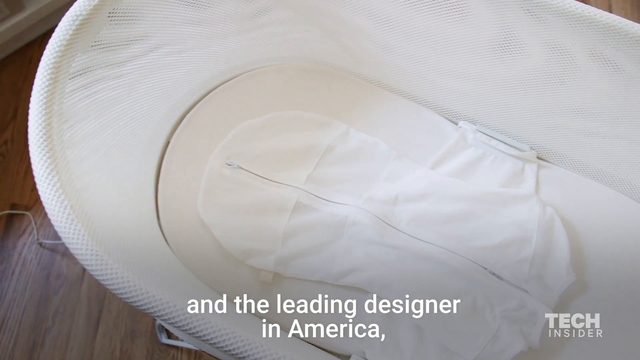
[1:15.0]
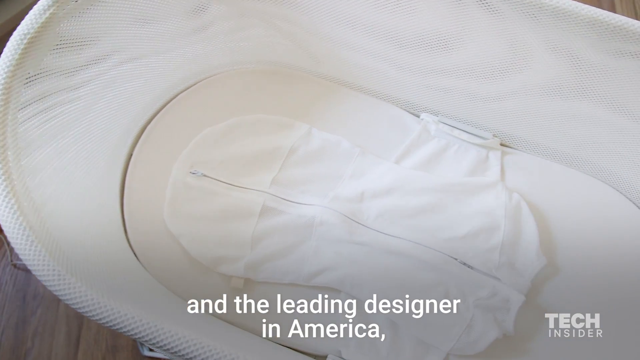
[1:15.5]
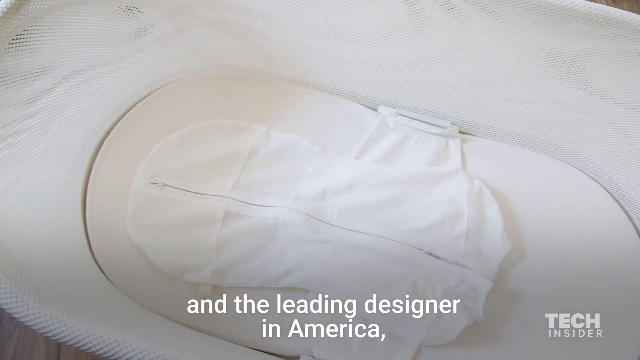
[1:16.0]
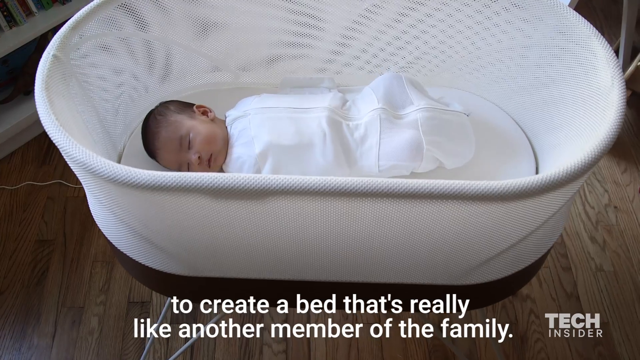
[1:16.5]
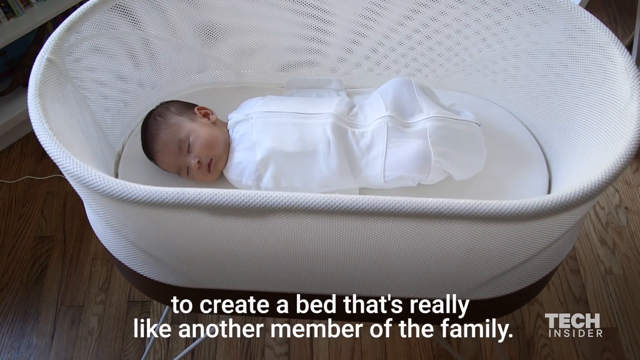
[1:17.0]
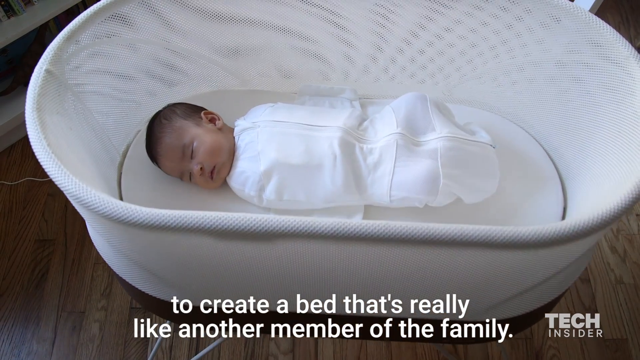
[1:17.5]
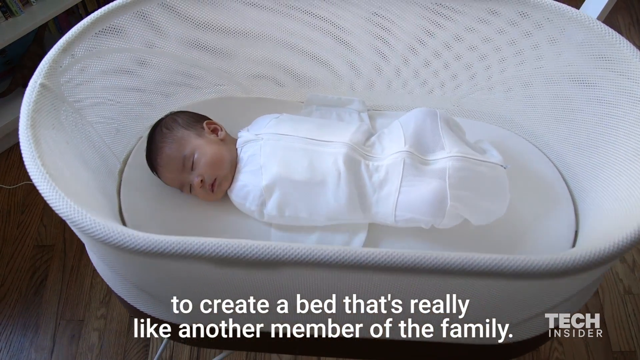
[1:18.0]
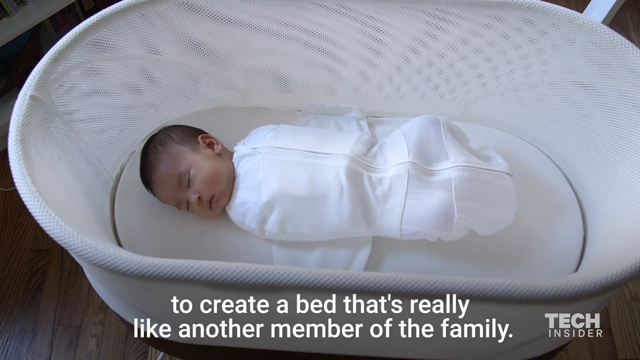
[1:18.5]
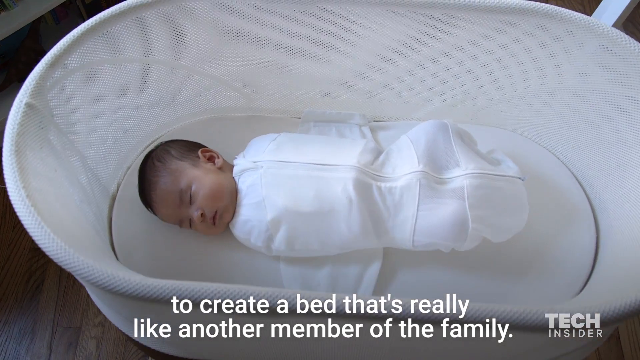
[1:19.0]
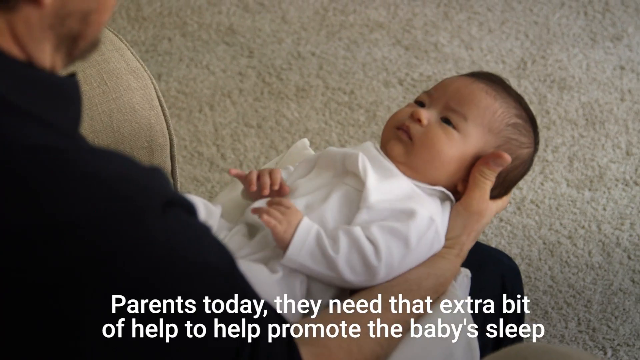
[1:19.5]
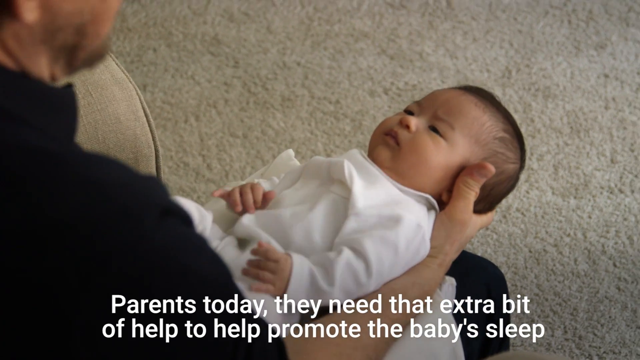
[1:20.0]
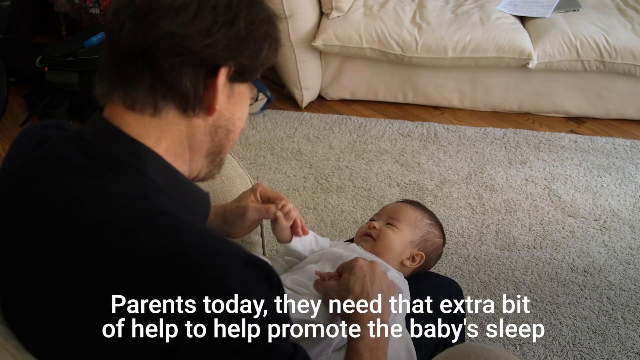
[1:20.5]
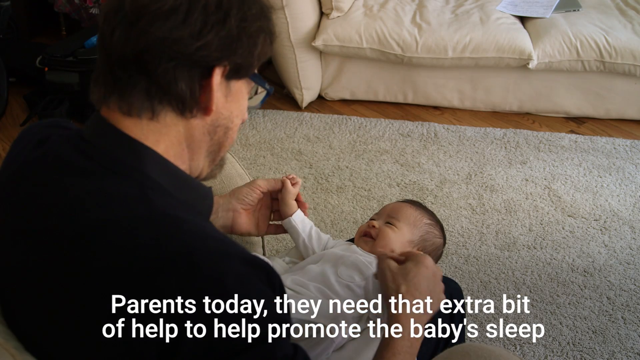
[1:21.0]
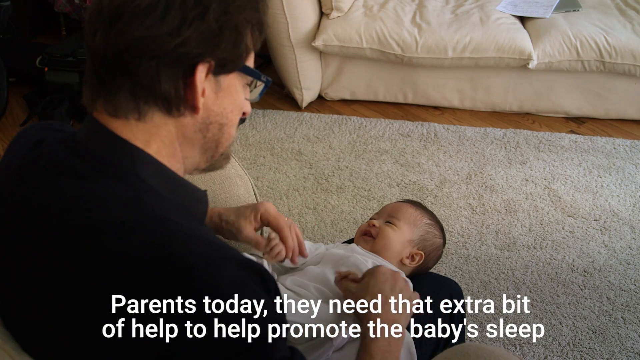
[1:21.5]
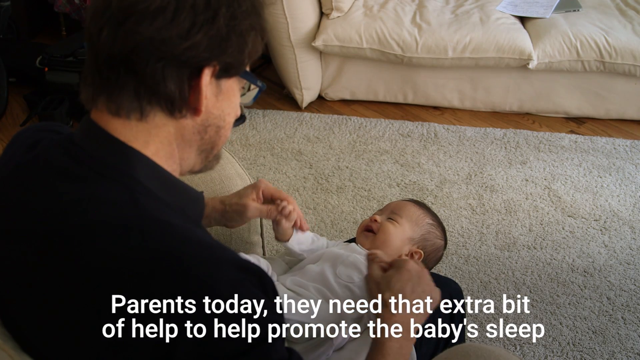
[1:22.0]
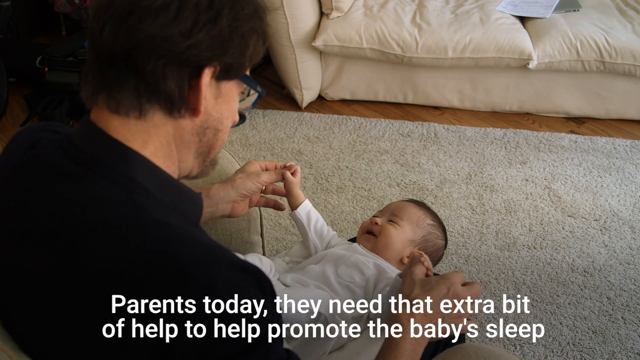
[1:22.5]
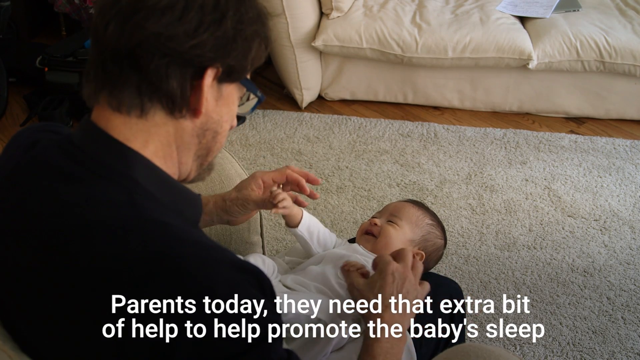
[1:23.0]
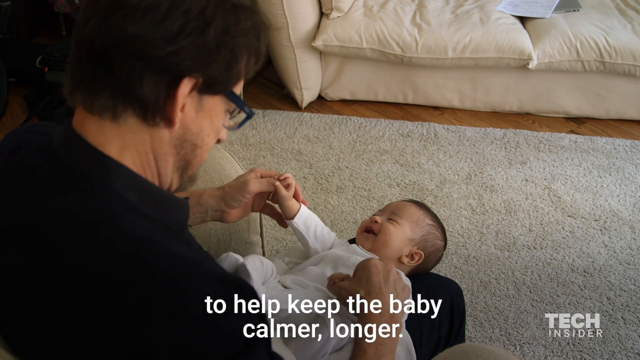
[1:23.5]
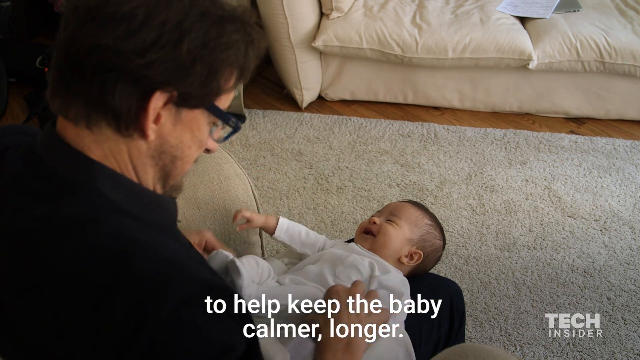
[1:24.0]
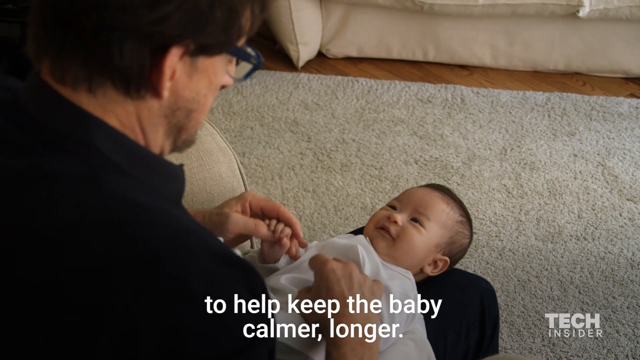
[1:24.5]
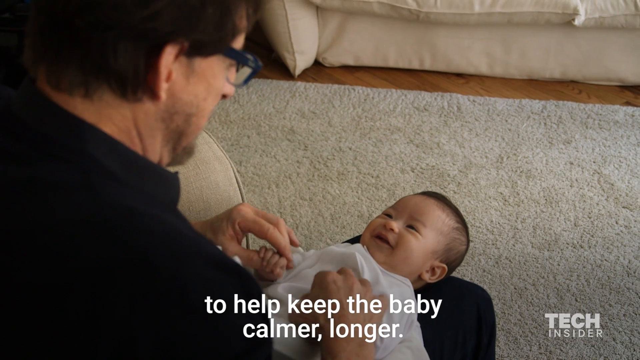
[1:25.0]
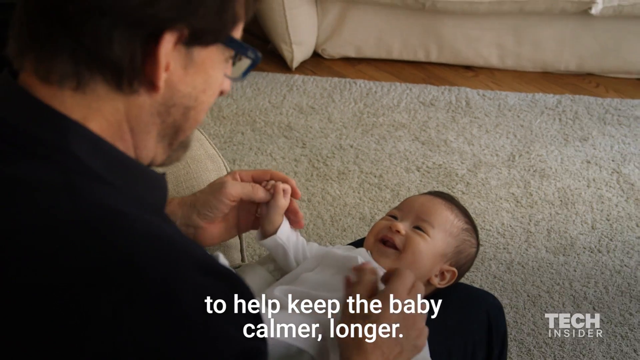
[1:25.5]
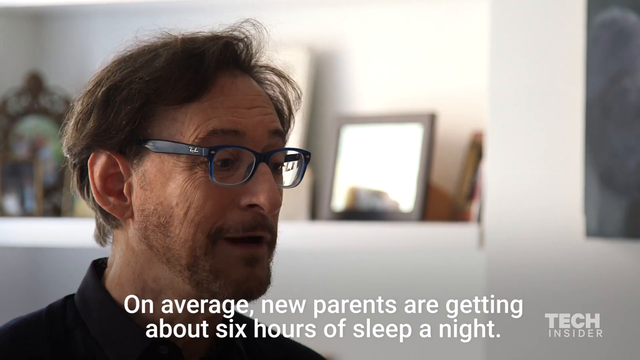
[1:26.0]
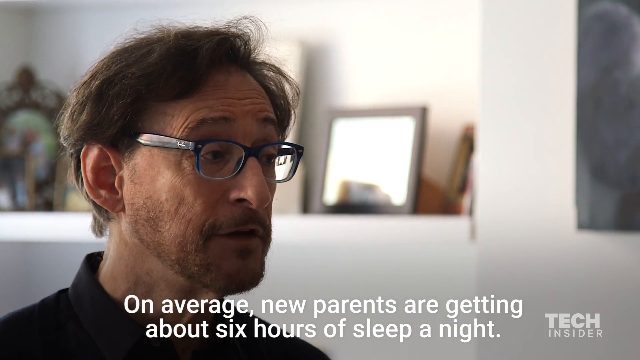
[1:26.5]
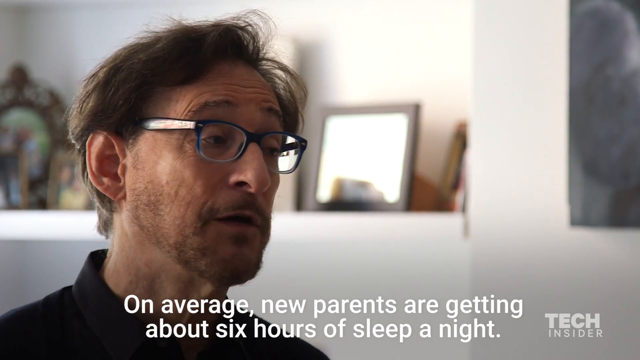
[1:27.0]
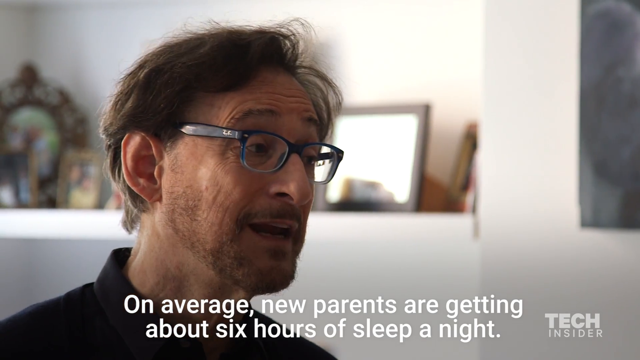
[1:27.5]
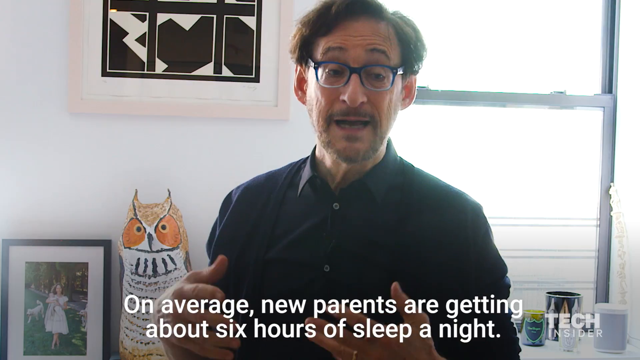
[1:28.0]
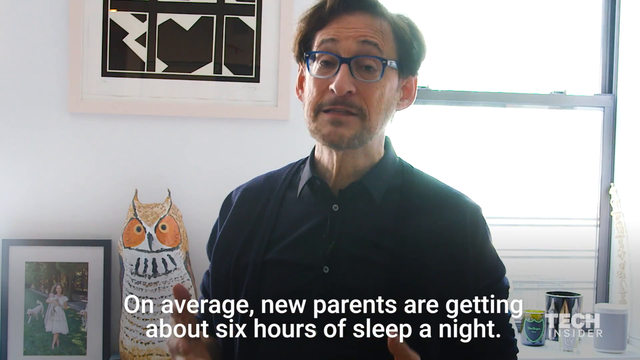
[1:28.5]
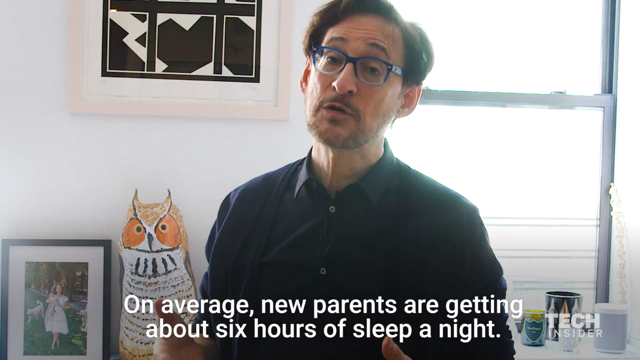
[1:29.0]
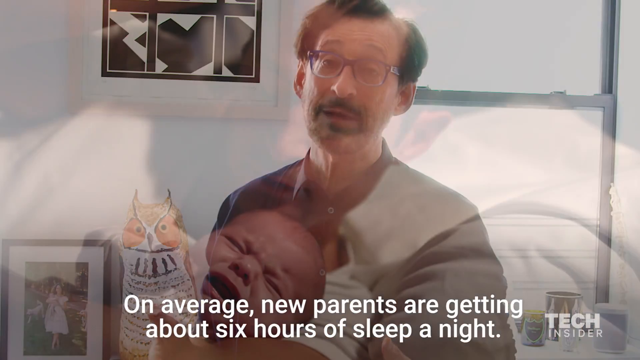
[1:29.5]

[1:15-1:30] A man with glasses looks at a baby dressed in white clothing. The baby appears very happy looking at the man, who plays with the baby's hands, moving them up and down. In a different scene afterwards, the man appears to be talking to the camera while standing in the middle of his house, with a couch in the background. The man appears very enthusiastic, and it appears to be daylight outside.